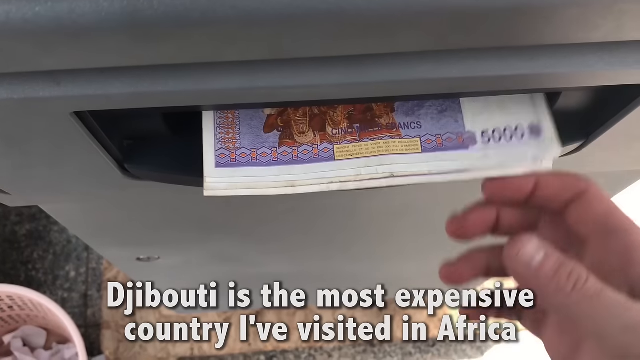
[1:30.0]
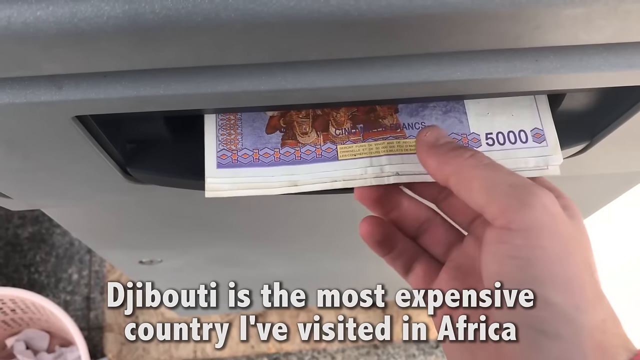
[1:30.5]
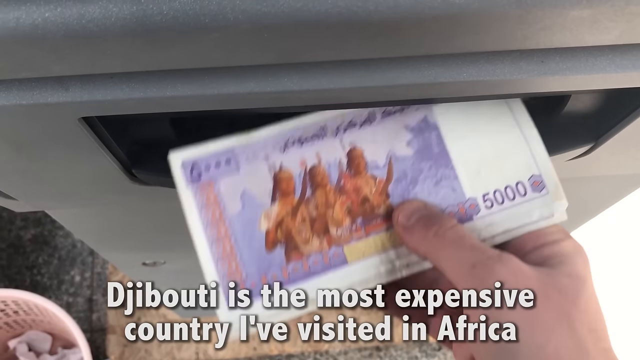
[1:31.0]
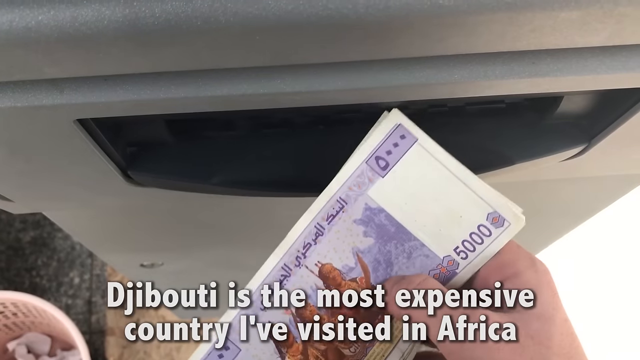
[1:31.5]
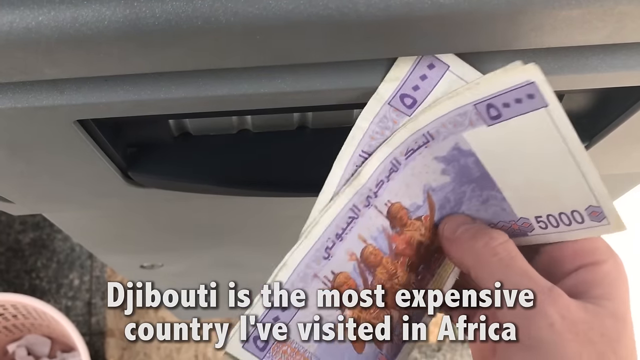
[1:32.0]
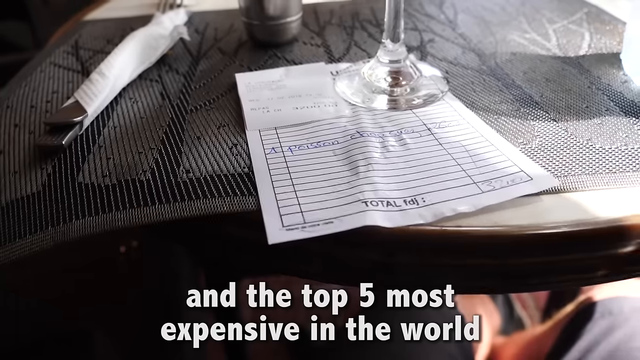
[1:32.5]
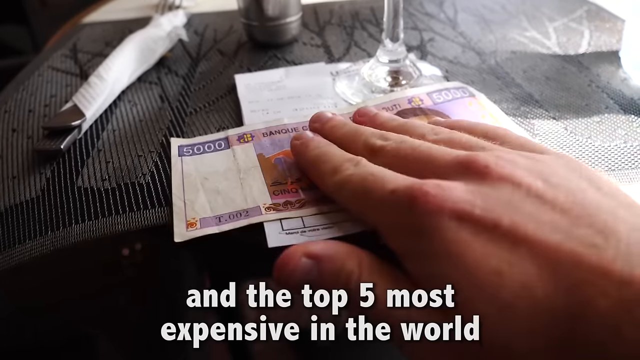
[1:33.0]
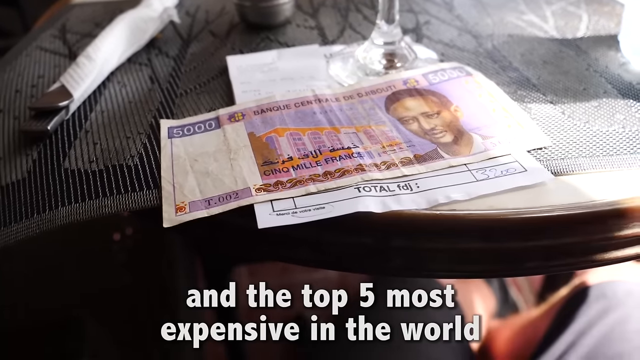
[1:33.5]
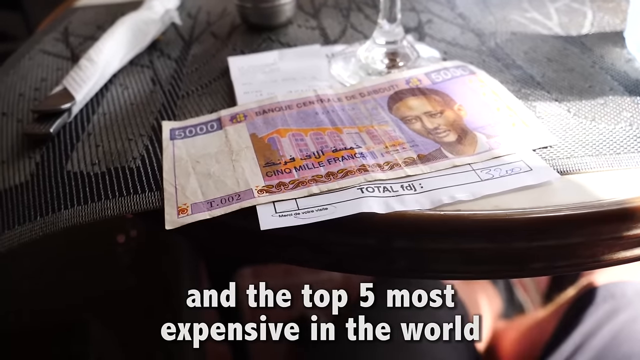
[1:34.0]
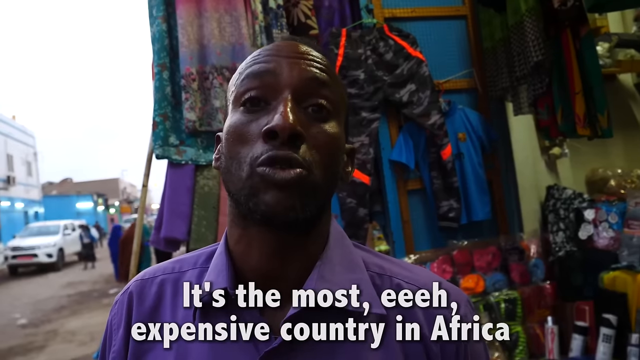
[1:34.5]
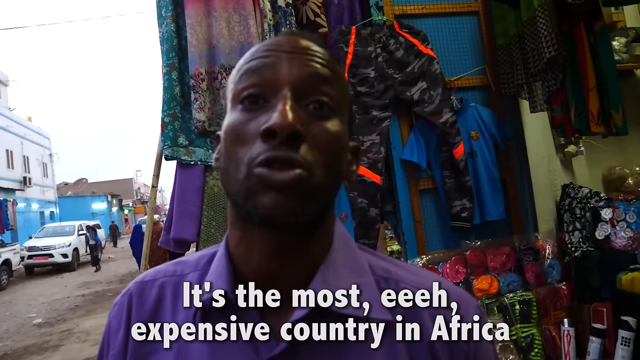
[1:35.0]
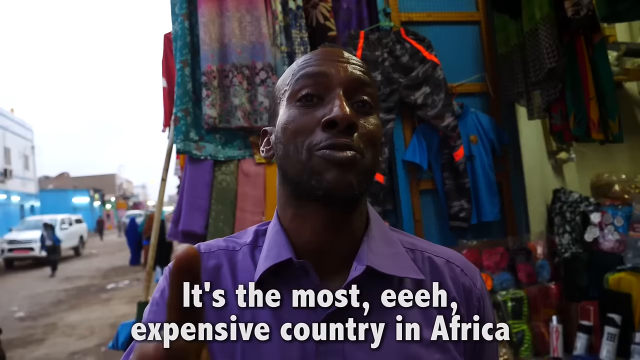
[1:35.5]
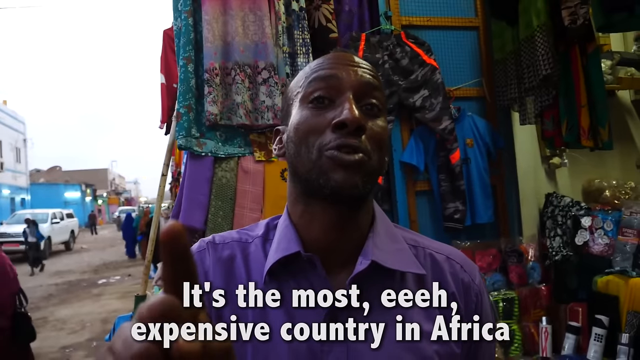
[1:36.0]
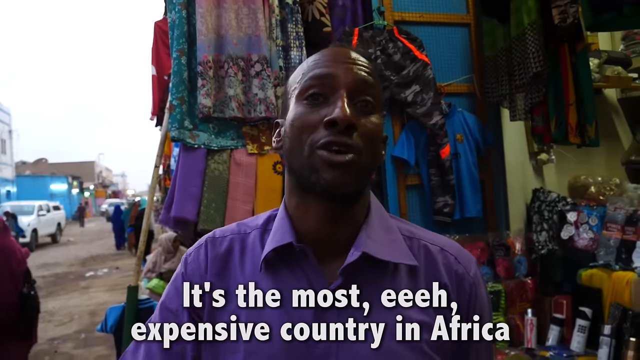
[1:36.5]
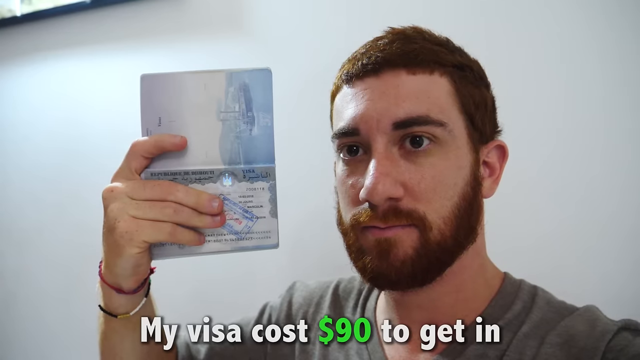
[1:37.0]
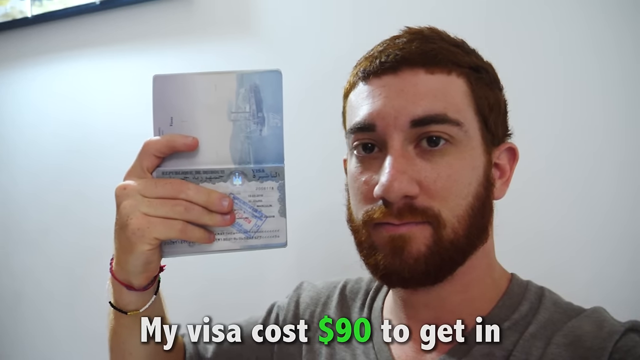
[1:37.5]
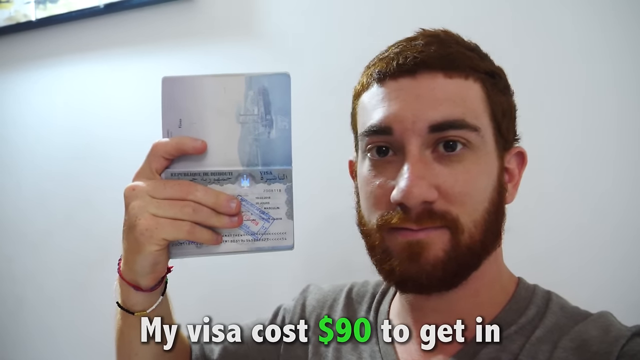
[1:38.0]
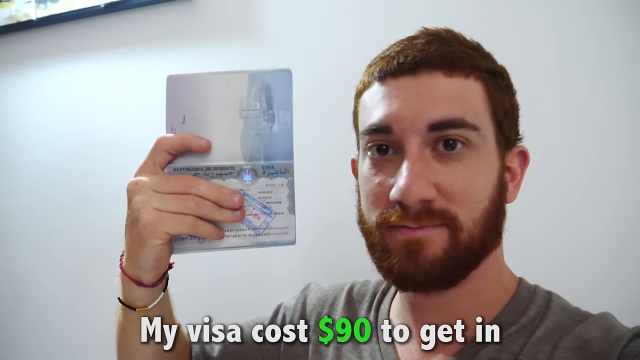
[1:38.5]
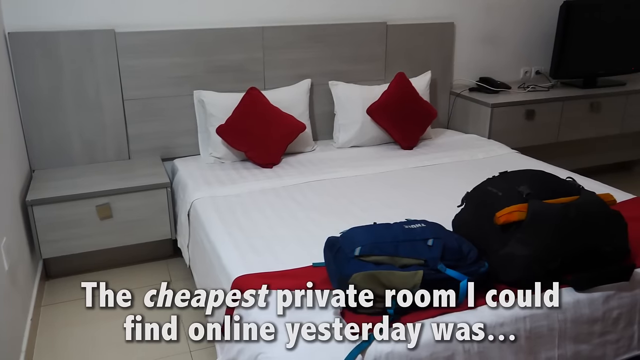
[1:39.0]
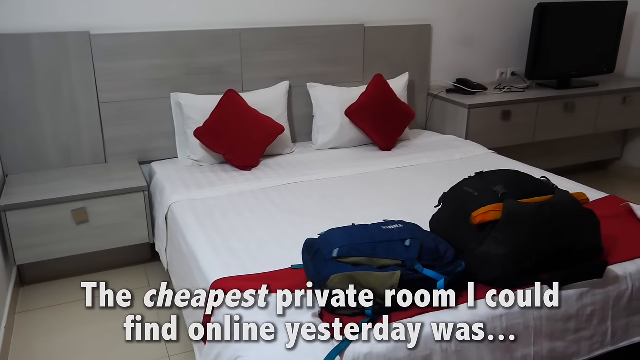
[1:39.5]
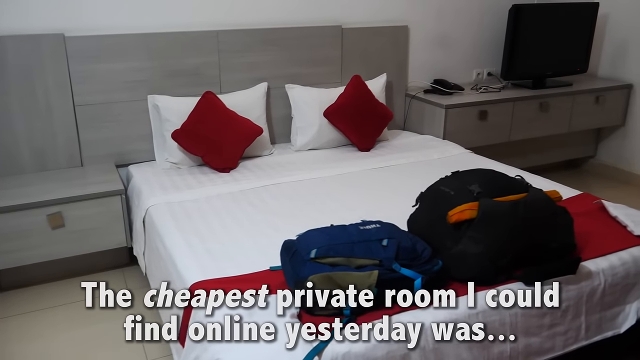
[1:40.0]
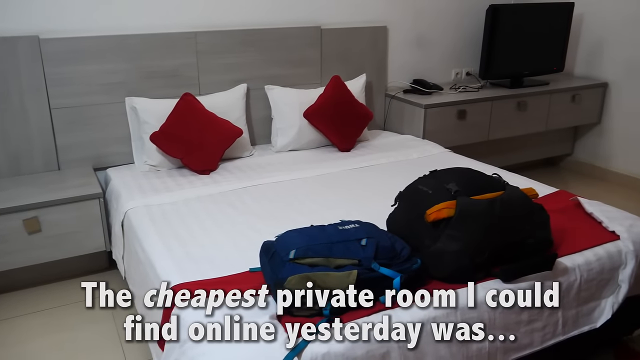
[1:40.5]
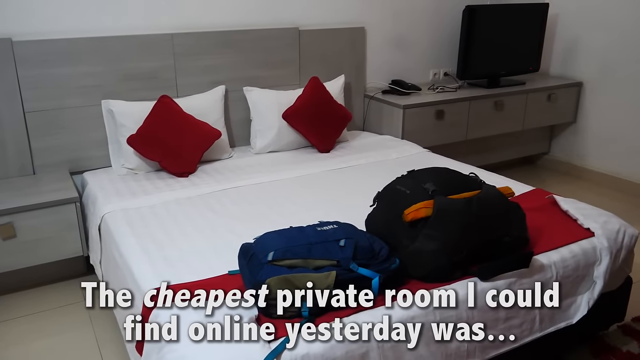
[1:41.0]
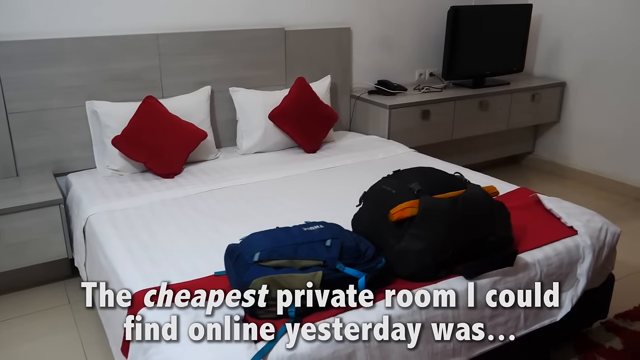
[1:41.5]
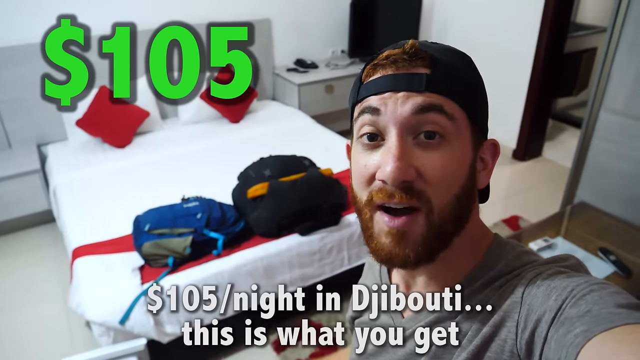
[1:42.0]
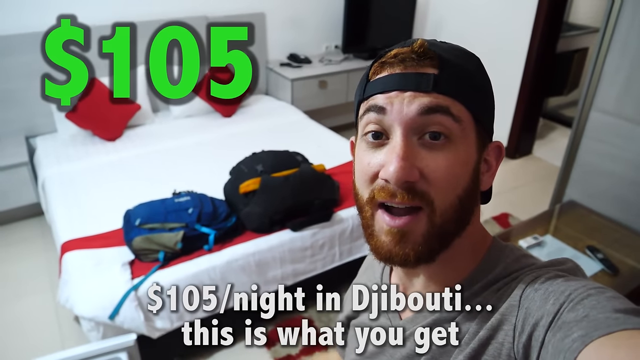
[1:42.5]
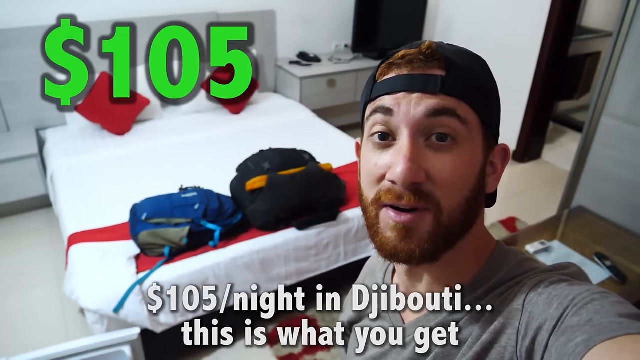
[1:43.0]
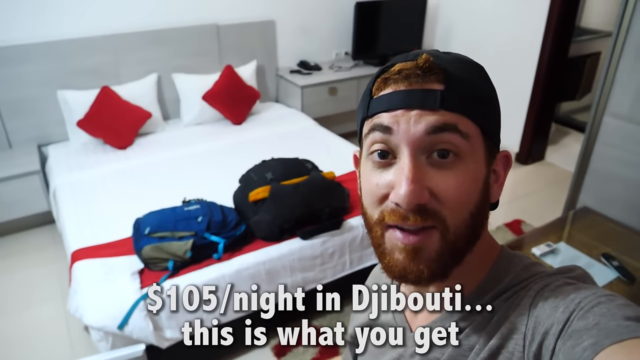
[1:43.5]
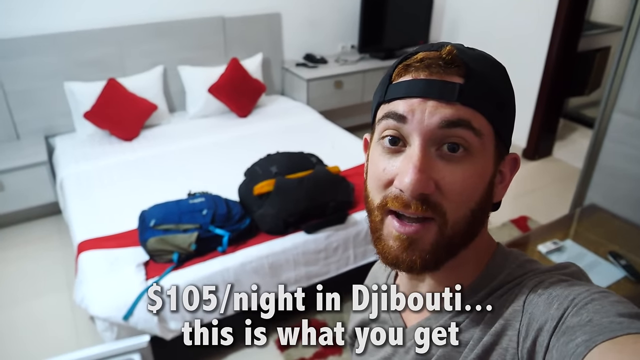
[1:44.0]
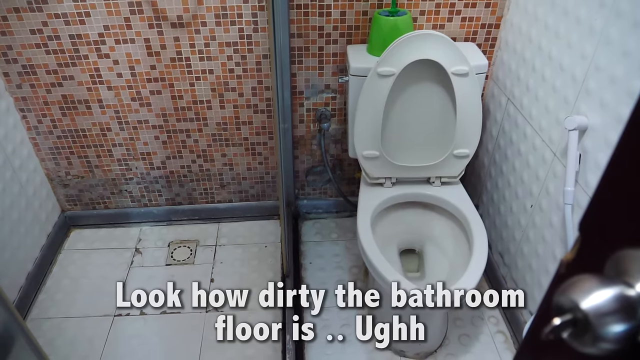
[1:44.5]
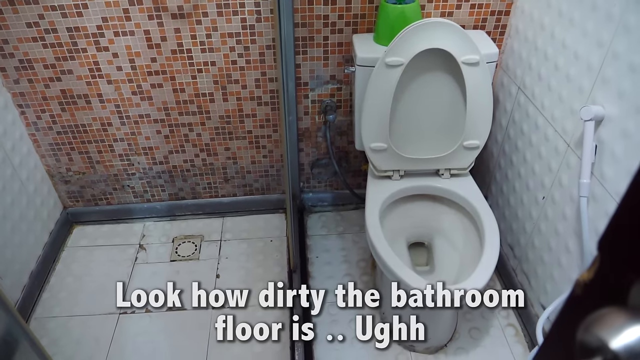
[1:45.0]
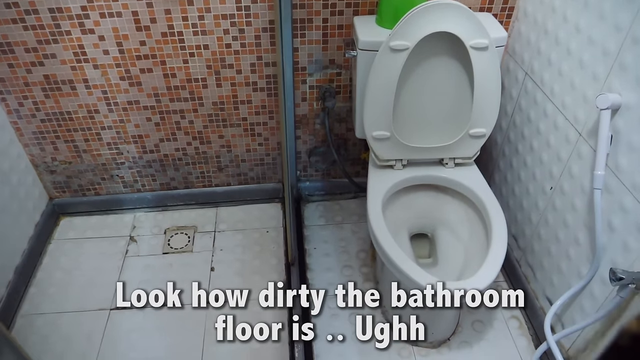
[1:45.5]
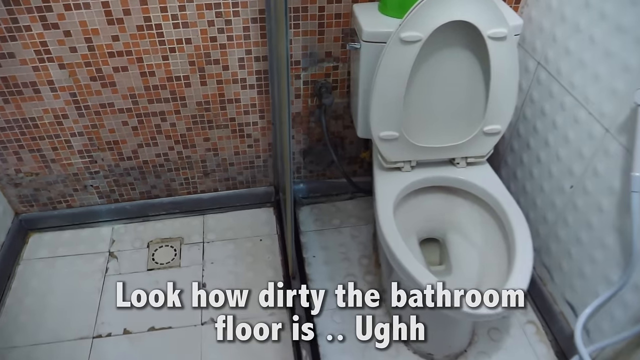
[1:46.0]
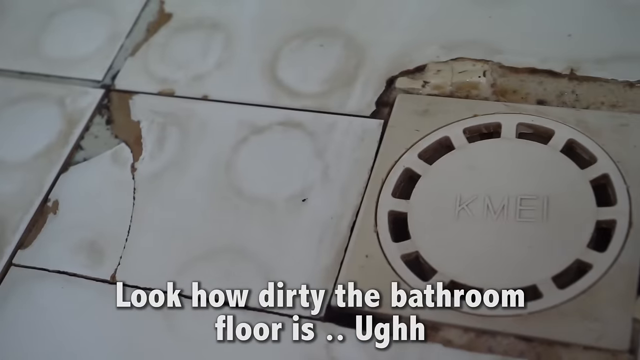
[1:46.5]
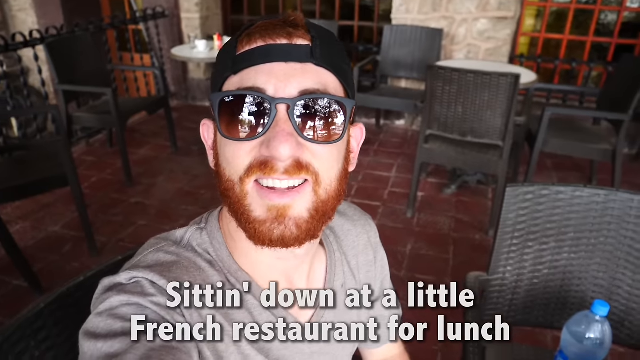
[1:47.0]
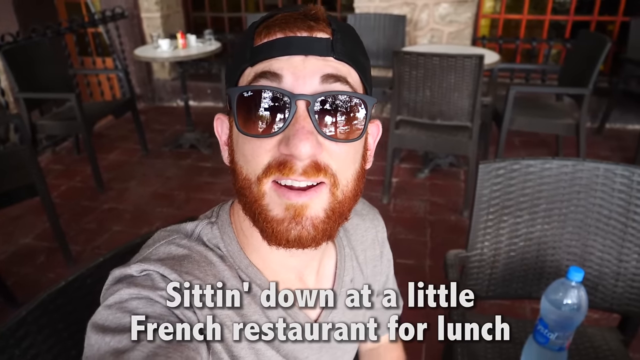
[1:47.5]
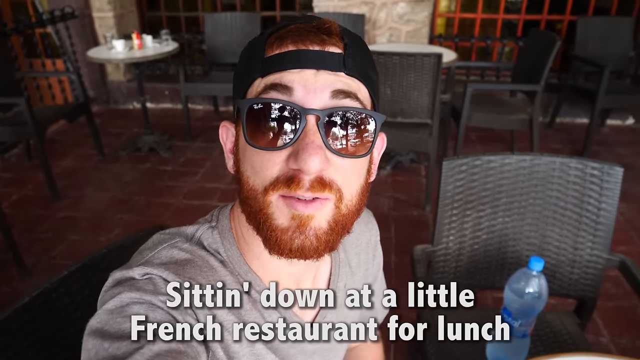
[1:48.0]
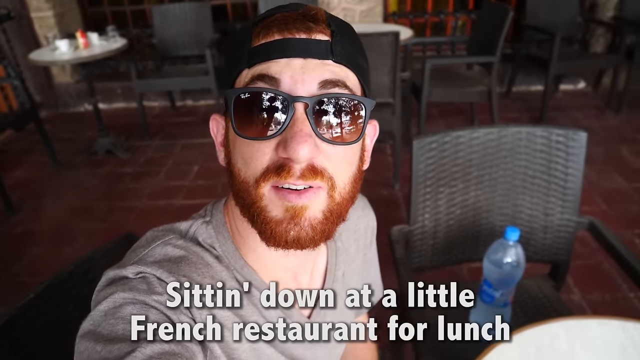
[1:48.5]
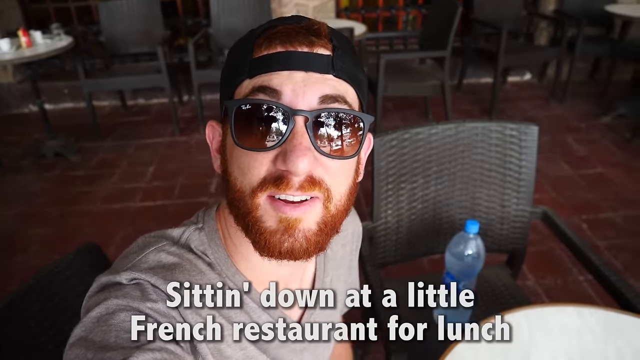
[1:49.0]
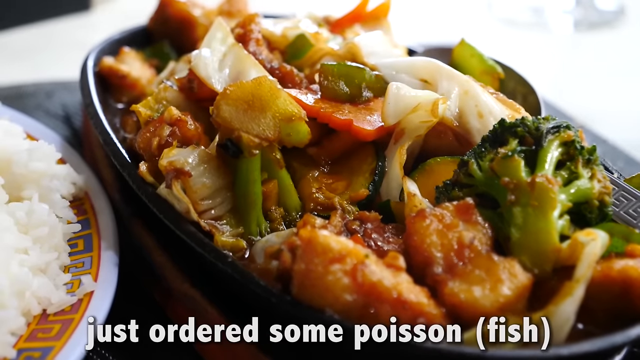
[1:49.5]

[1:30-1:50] Text says this is the most expensive country in Africa: $105 a night gets a one-bedroom, very cheap-looking hotel room, the cheapest he could find online the day before. Pictures of the money show someone's face on it. The bathroom is dirty, with broken tiles, and it is shown more than once. He pays a bill for food he ordered, and text says his visa cost $90. At the French restaurant he orders something that apparently reads "La Poussine." The restaurant looks clean inside, with glass or crystal stemware. The hotel bed is white with red throw-type pillows on it. At the restaurant there is a dish of rice and some vegetables with what appears to be chicken, plus a bottle of water on the table.